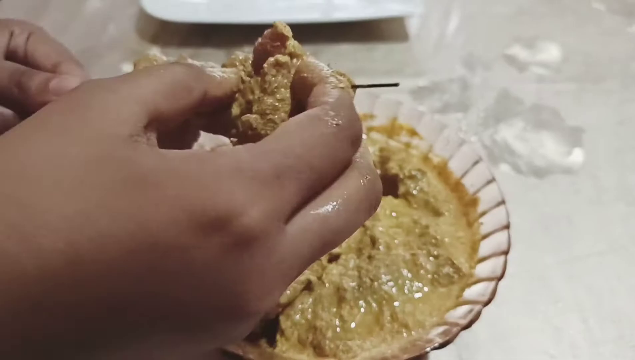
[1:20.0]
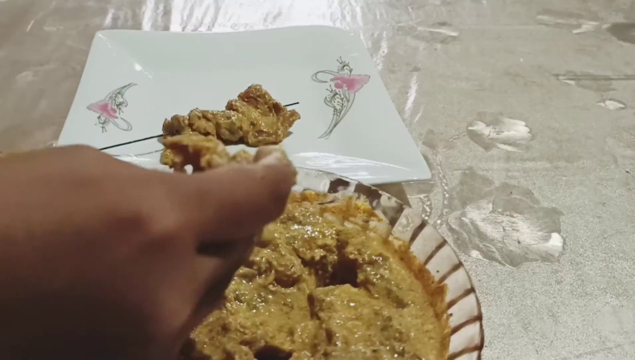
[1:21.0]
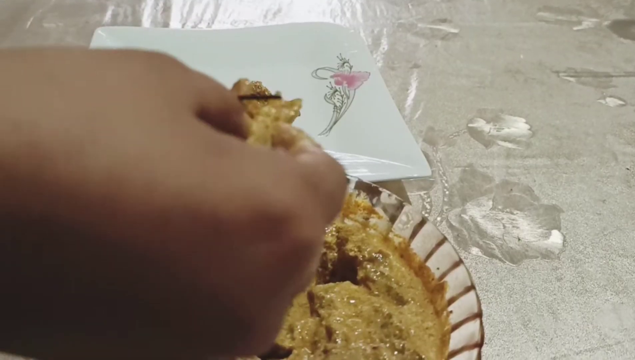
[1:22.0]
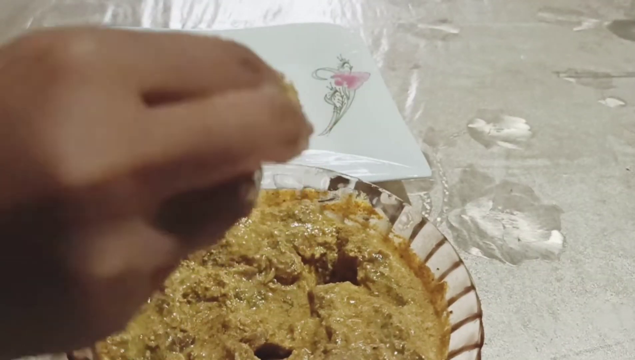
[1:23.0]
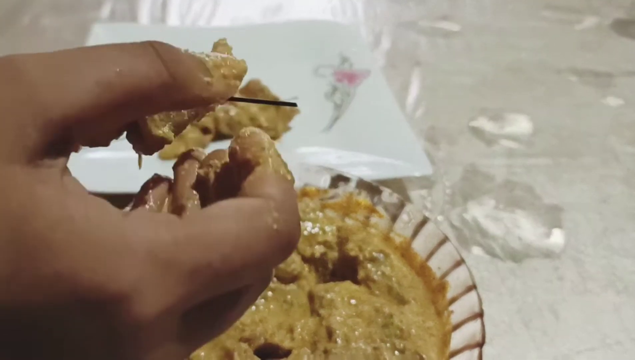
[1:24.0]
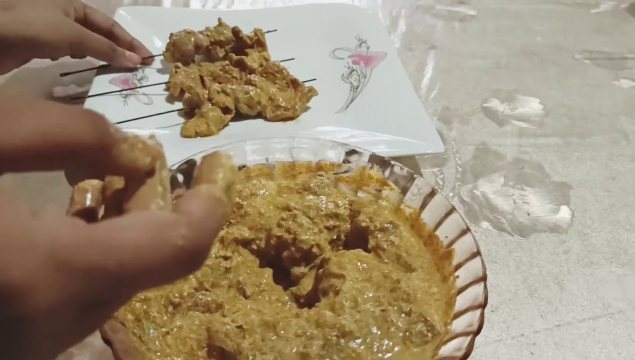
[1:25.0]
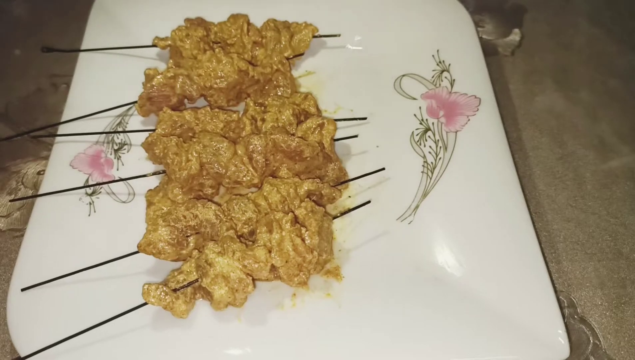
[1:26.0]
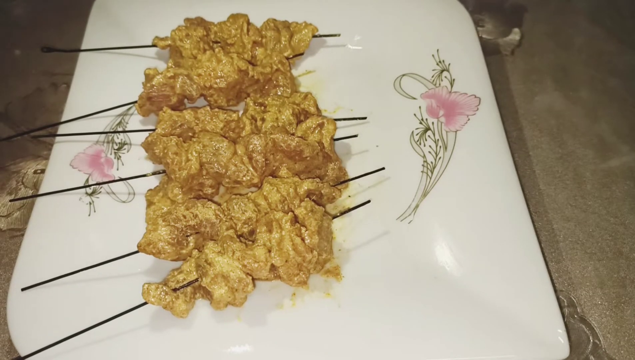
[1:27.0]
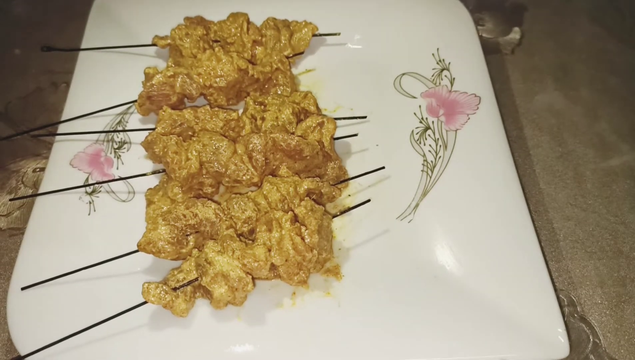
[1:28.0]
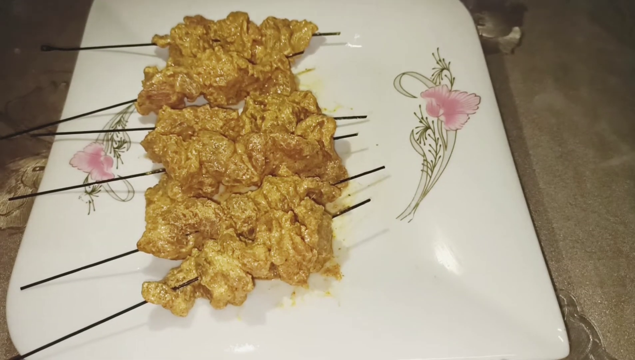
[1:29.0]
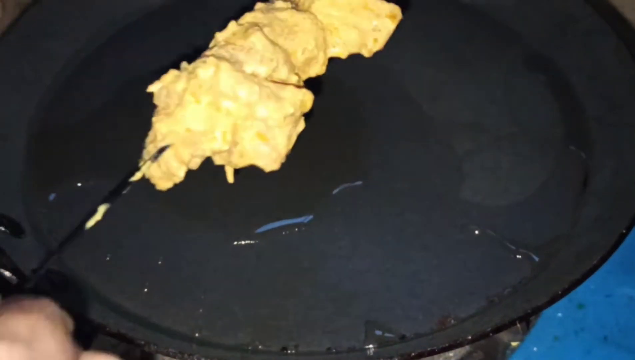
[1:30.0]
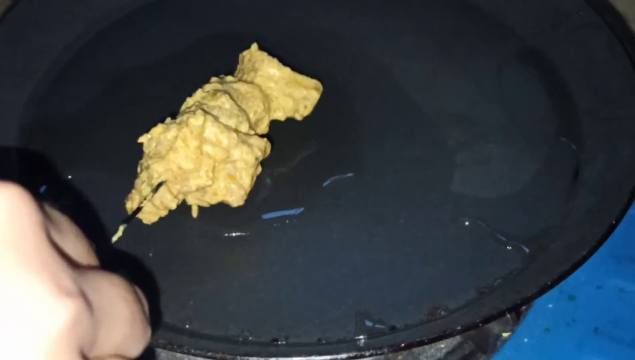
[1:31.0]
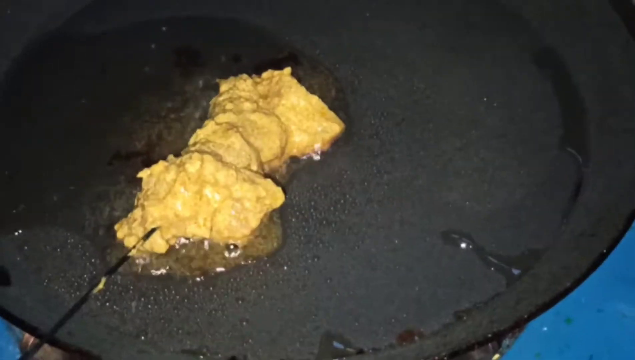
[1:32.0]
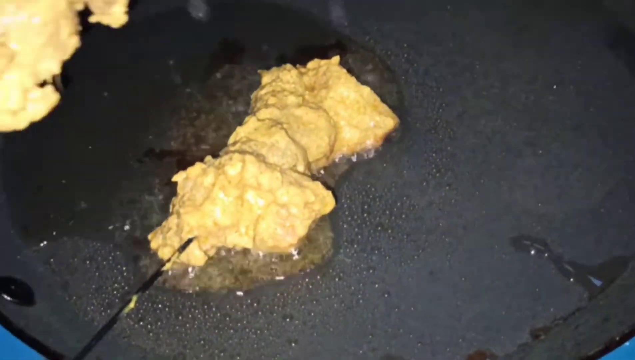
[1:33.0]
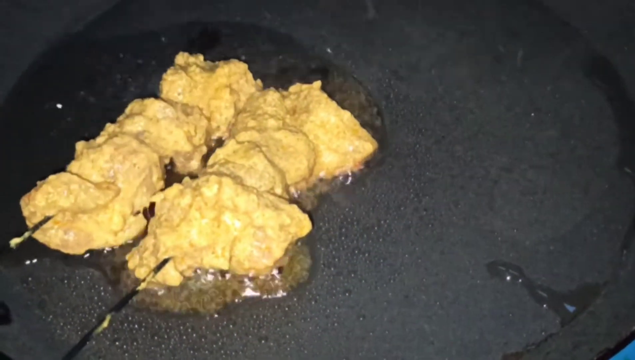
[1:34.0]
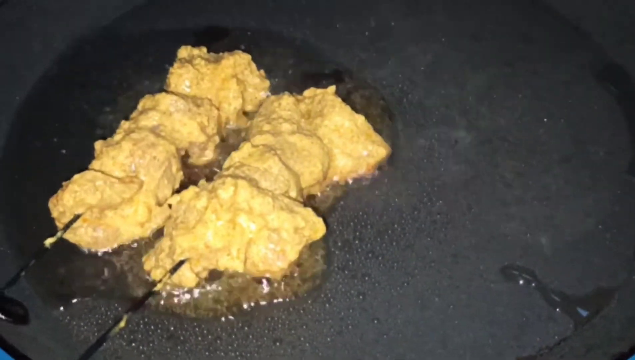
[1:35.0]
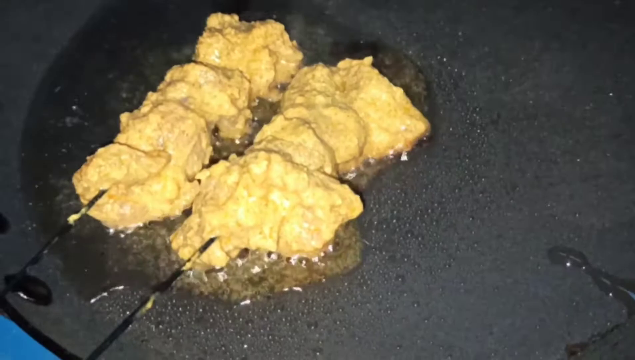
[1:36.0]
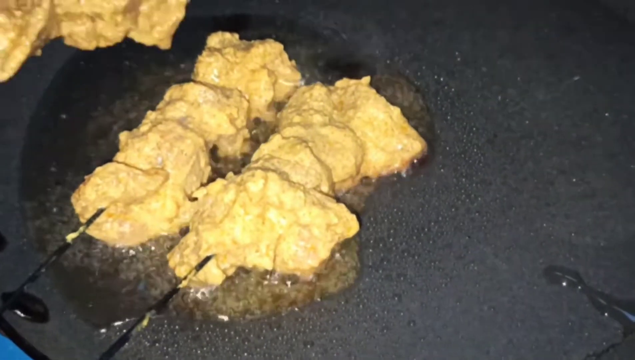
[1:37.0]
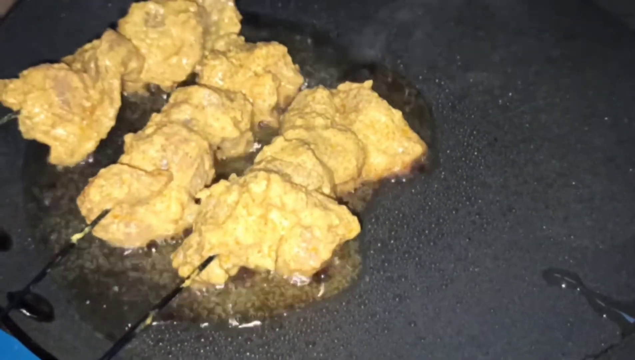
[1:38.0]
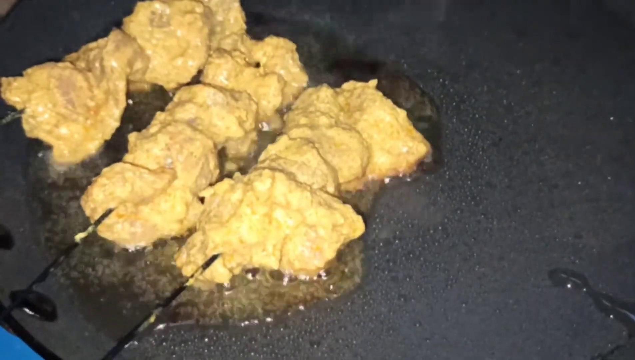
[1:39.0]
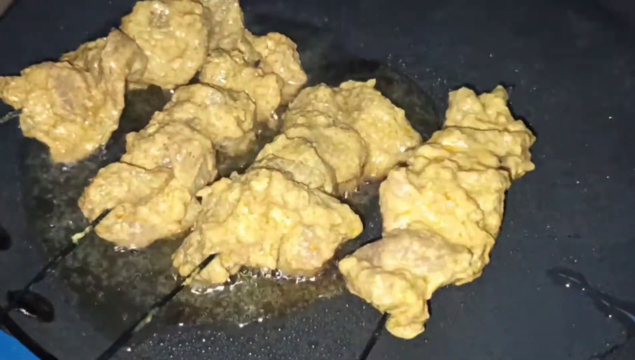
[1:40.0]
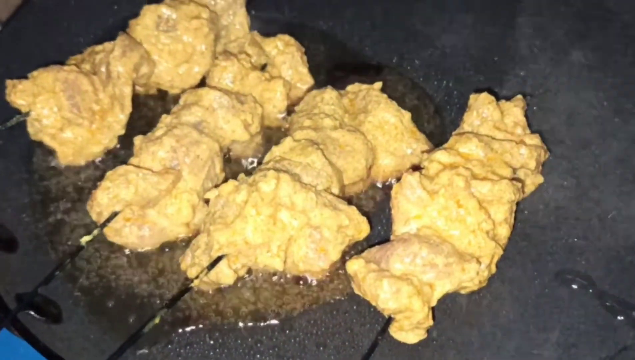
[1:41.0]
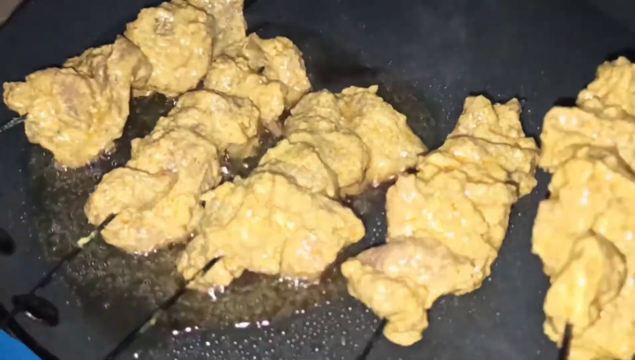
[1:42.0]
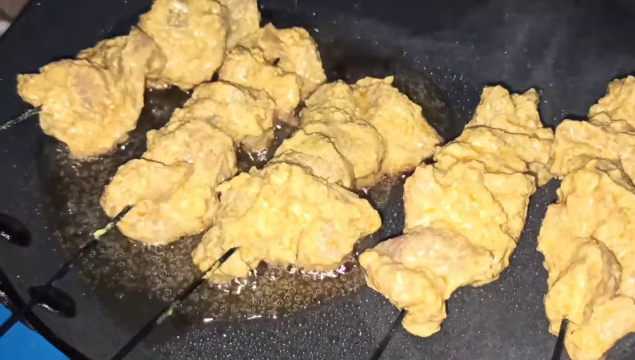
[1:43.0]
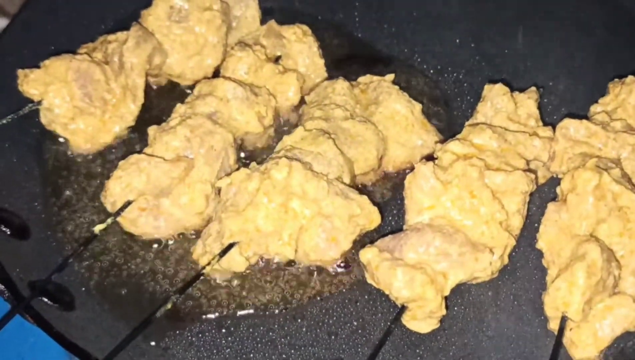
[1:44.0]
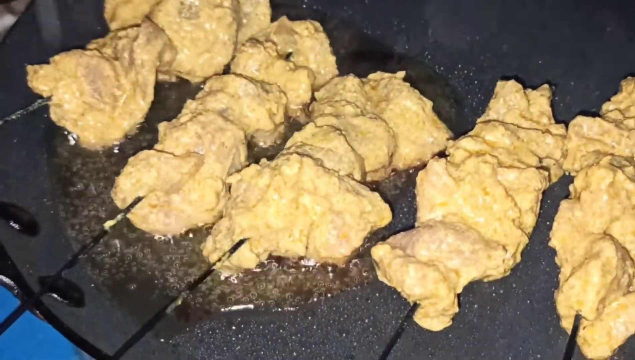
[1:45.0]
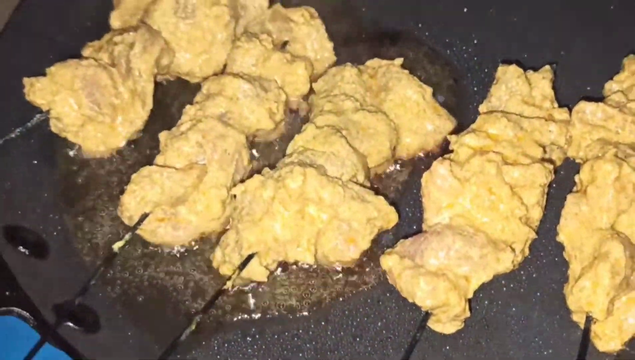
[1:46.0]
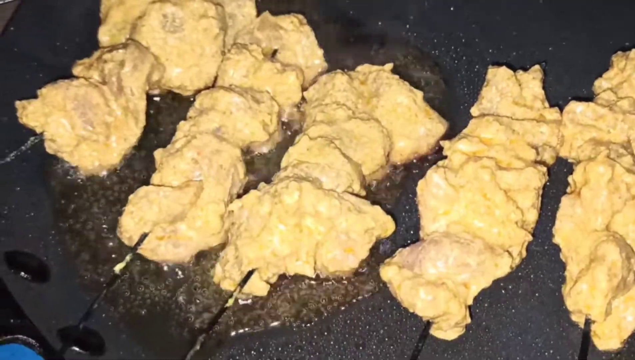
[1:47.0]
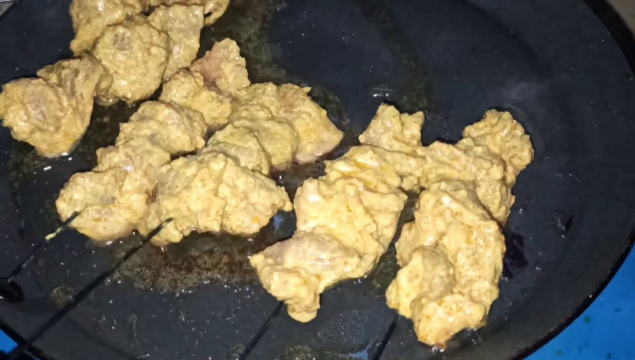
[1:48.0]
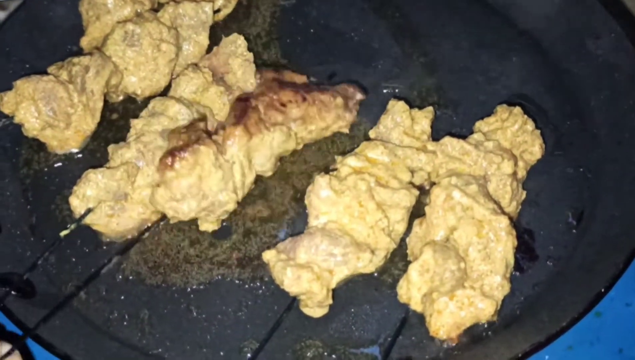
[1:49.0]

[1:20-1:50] A person pulls very light brownish-yellow meat fillets out of a mixing bowl one by one and pierces them onto metal skewers. A white plate is visible in the background, and the person adds the skewers to it as they are completed; three skewers are visible on the plate, and then six. Next, the person places the skewers one at a time into a preheated saucepan with a light coating of oil. Small bits of oil jump off the pan from the heat. The person then turns the skewers one by one, showing that the side that was on the bottom has begun to brown and cook.